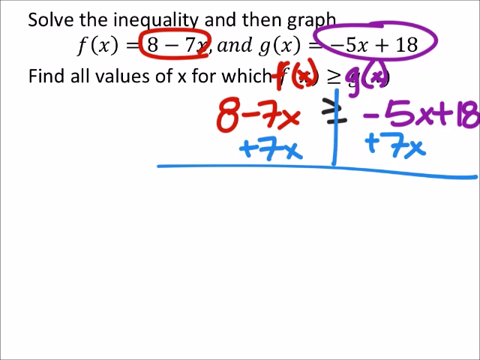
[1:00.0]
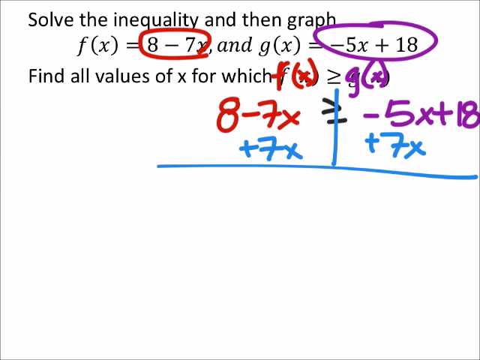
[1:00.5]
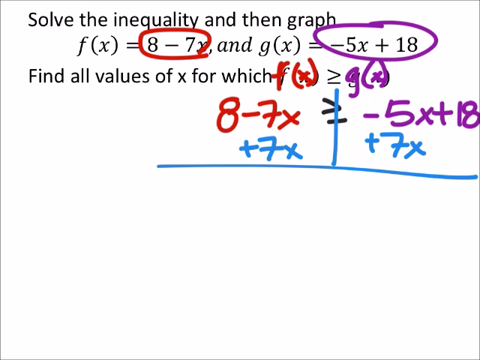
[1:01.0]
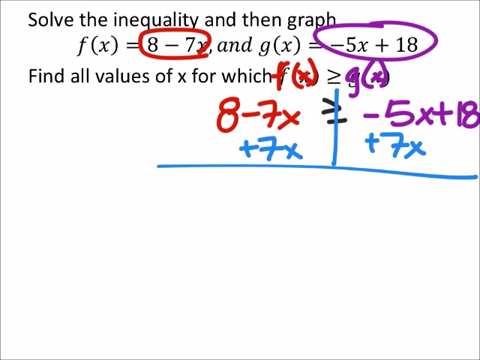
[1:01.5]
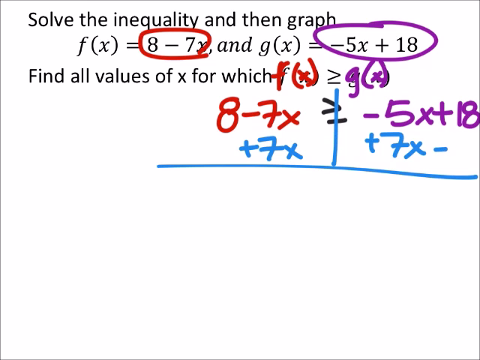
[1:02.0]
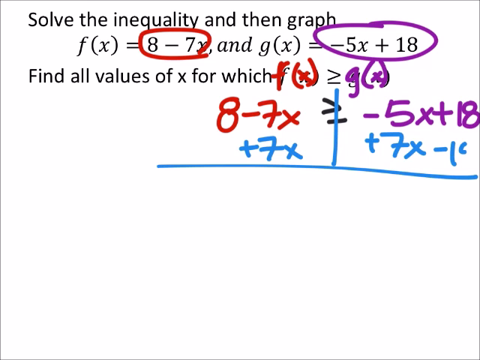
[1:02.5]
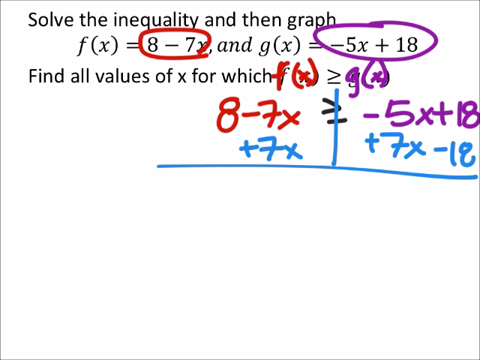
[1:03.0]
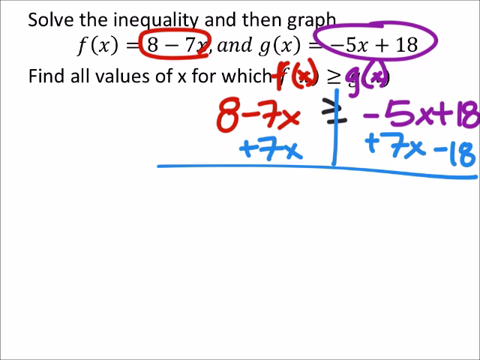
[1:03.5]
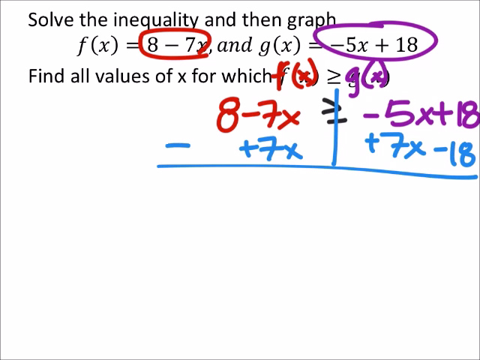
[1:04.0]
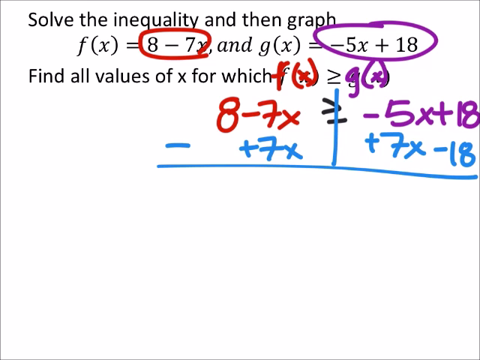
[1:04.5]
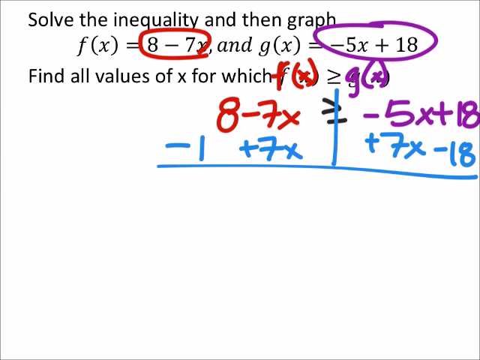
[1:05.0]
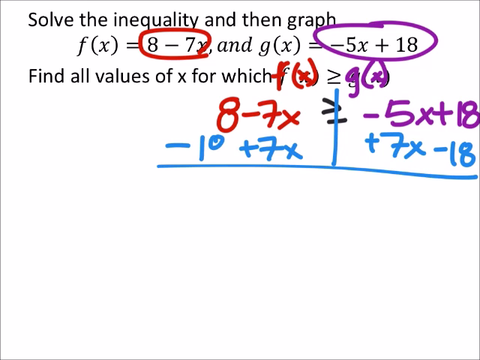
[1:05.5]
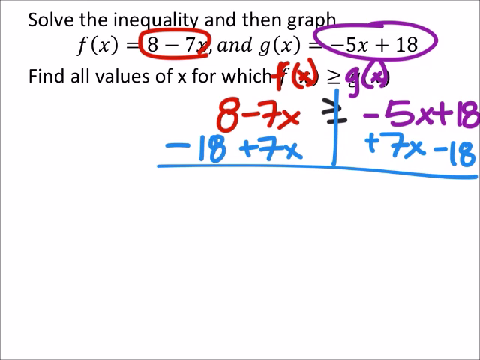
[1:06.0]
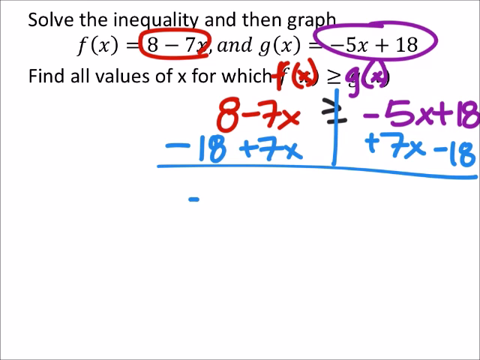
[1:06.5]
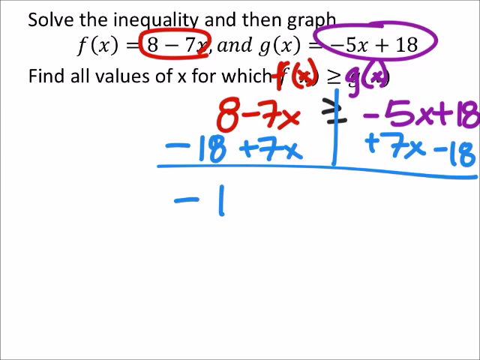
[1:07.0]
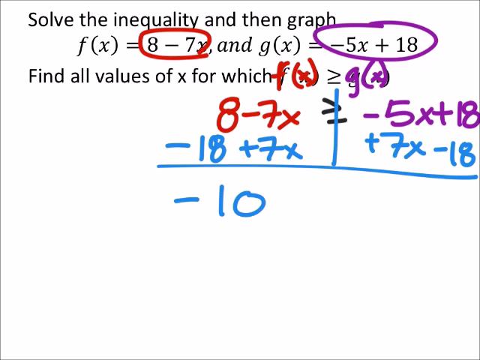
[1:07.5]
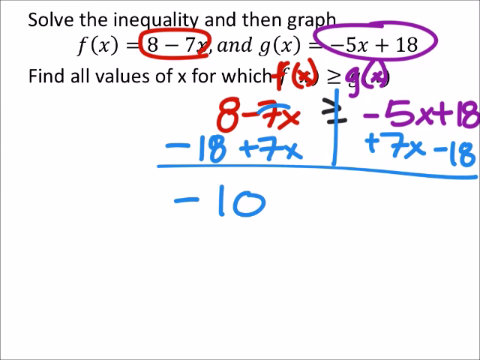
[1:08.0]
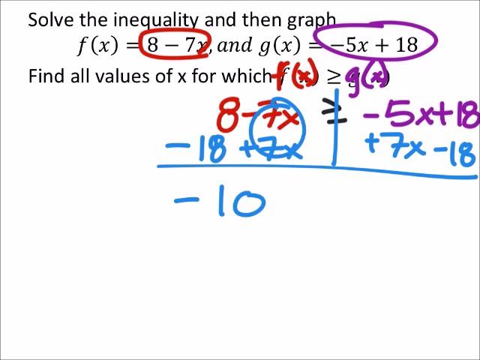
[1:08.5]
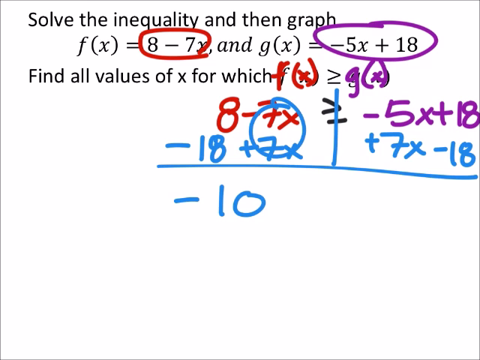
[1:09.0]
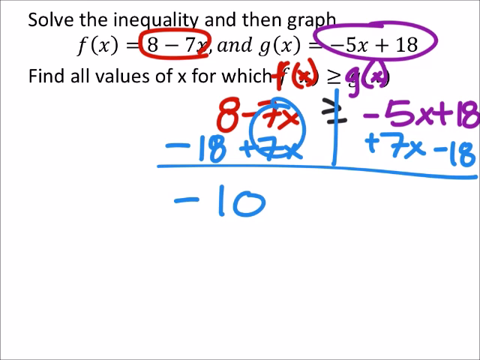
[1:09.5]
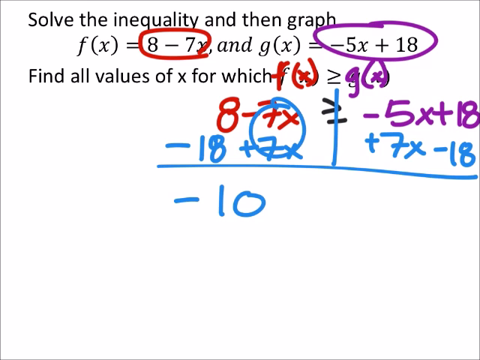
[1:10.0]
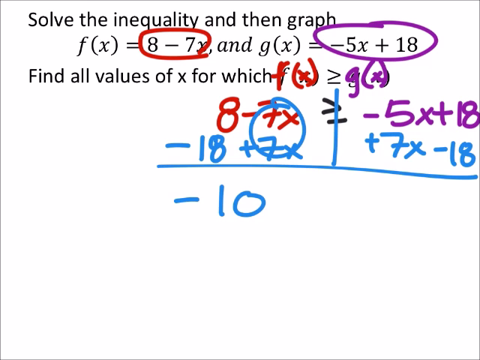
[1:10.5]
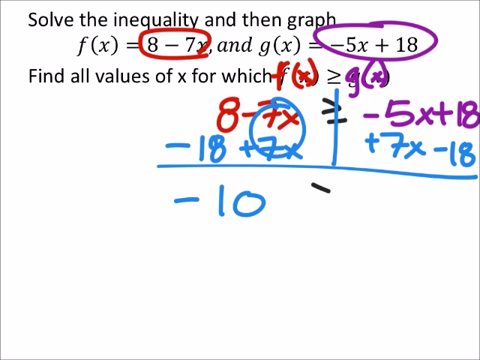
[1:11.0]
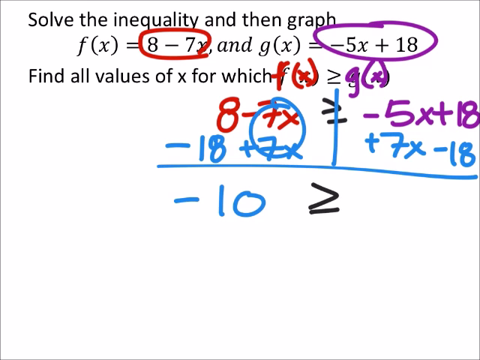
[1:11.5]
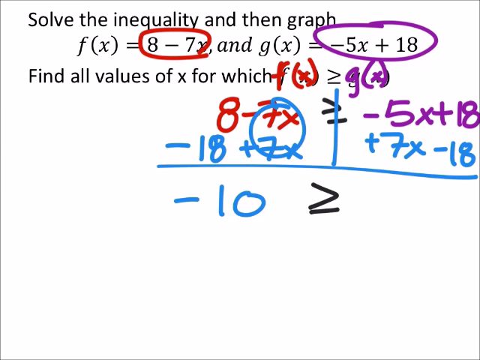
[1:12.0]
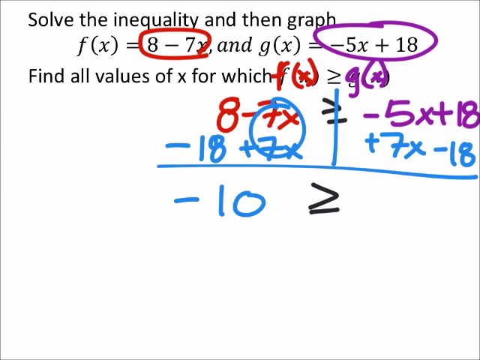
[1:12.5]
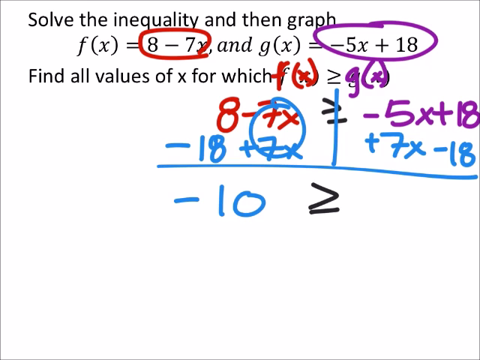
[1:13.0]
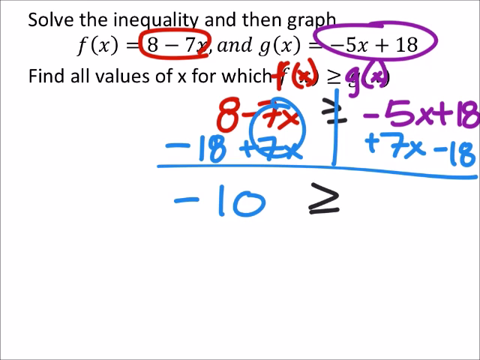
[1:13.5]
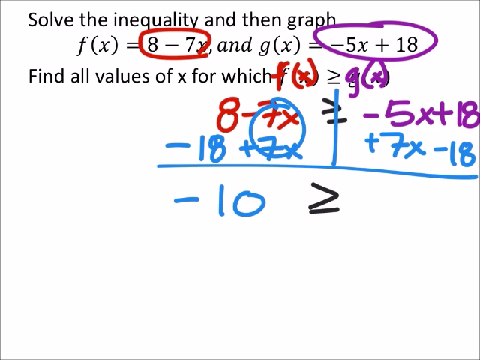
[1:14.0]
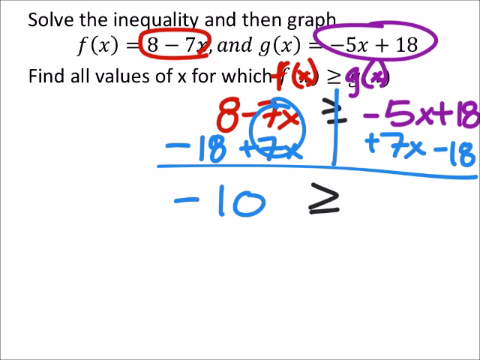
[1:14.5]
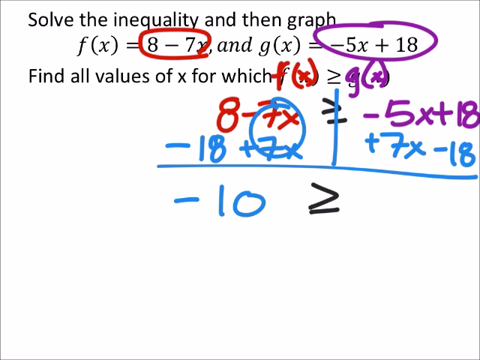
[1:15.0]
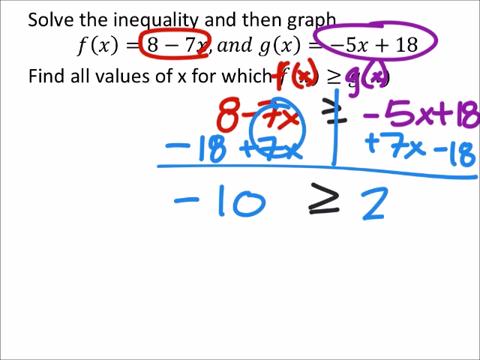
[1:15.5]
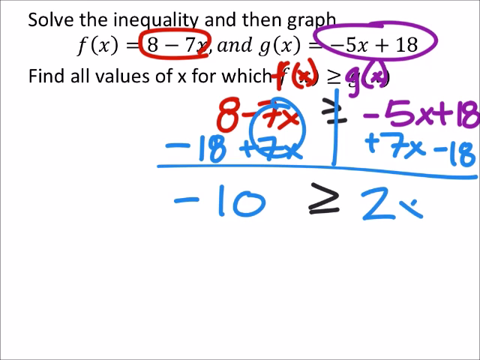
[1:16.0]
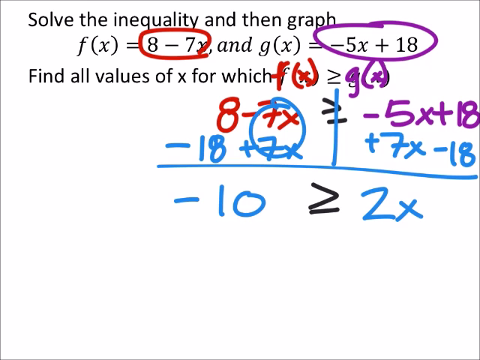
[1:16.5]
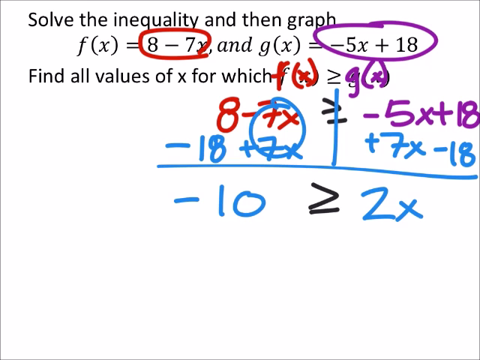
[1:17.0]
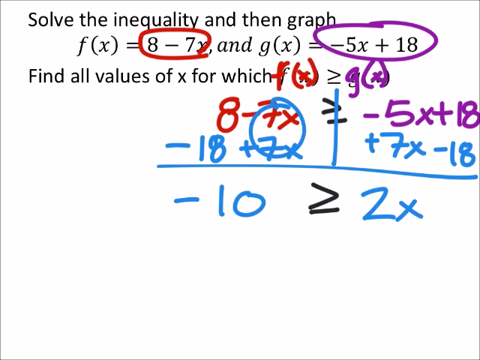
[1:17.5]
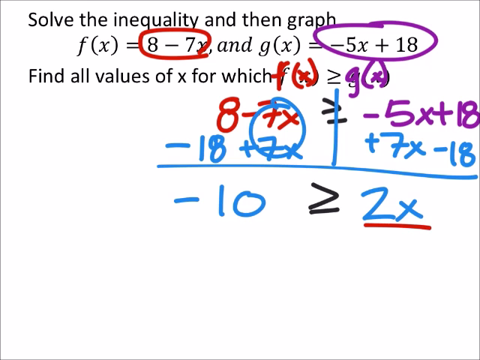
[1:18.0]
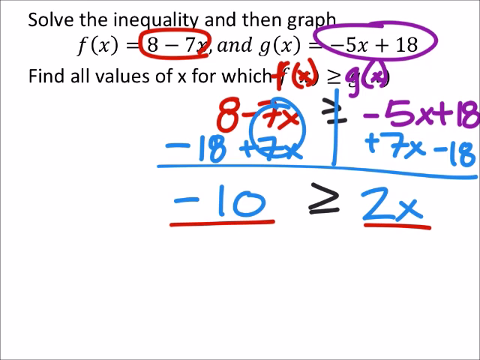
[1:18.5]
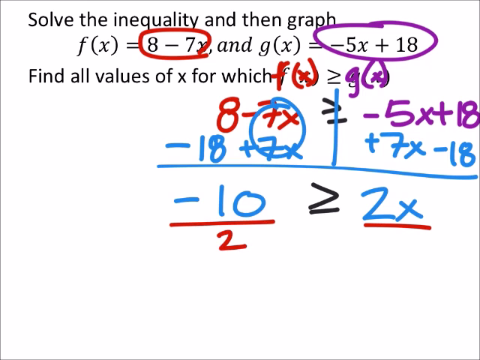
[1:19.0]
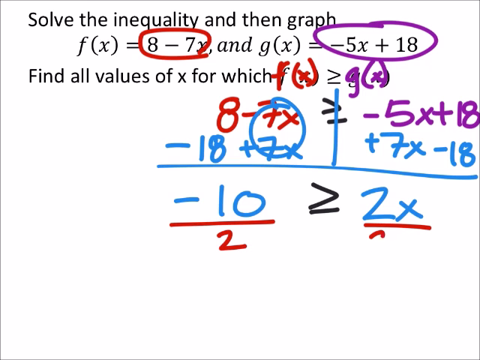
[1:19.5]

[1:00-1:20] The blue line between the two plus 7x terms is finished; it runs from above the line to the center of the line. To the right of the right plus 7x, minus 18 is written in blue, and on the left side, minus 18 is written in front of the left plus 7x. Below the line, minus 10 is written. A circle is then drawn on top of the blue plus 7x and the red minus 7x. Back below the line, a greater-than sign with a line underneath is drawn, and 2X is written in blue to the right of it. Two red lines are then drawn underneath the two blue numbers at the bottom, and a 2 is written in red underneath each red line.